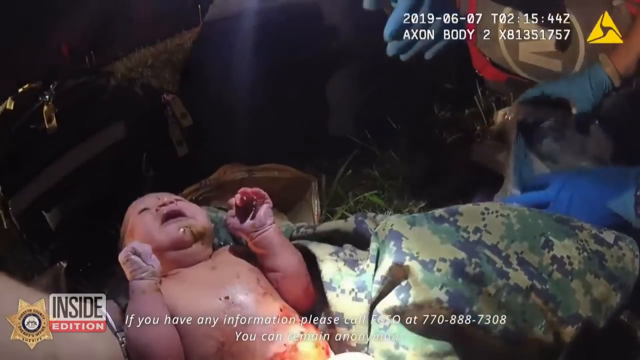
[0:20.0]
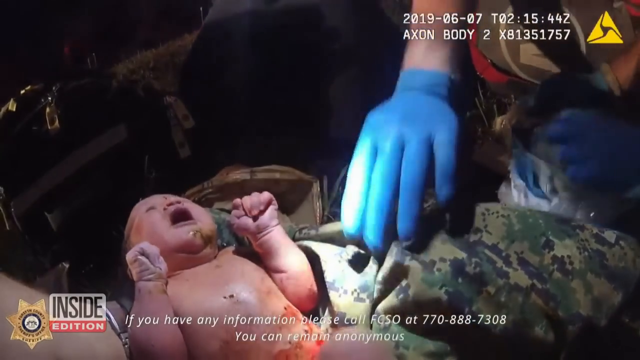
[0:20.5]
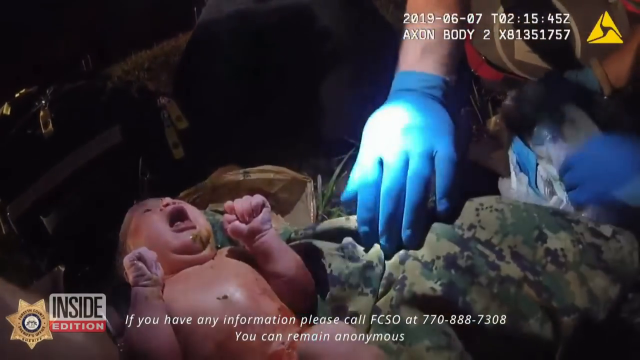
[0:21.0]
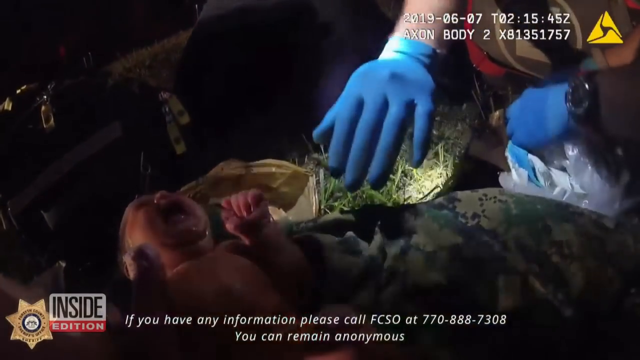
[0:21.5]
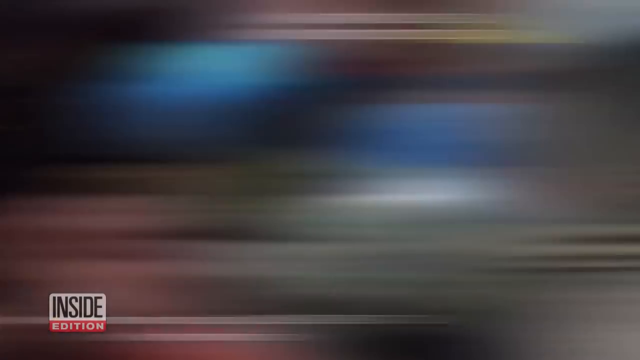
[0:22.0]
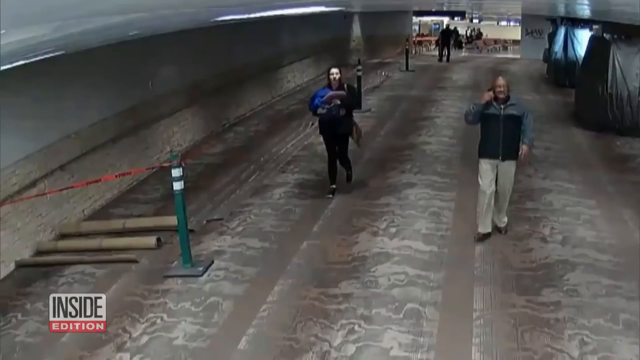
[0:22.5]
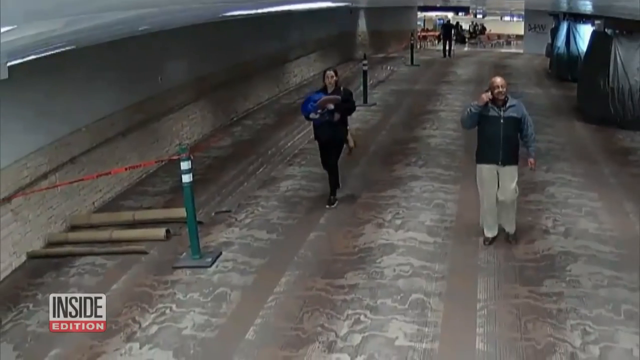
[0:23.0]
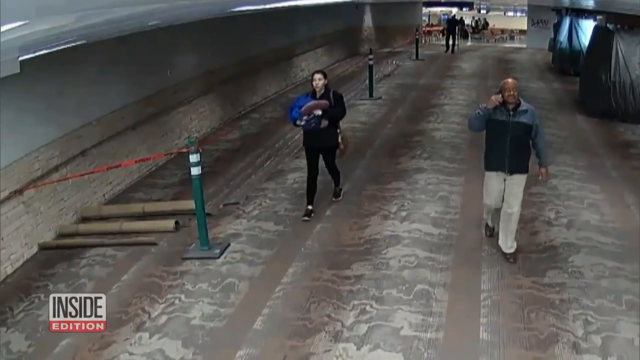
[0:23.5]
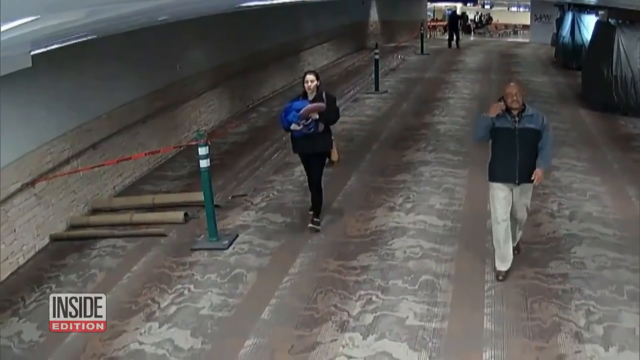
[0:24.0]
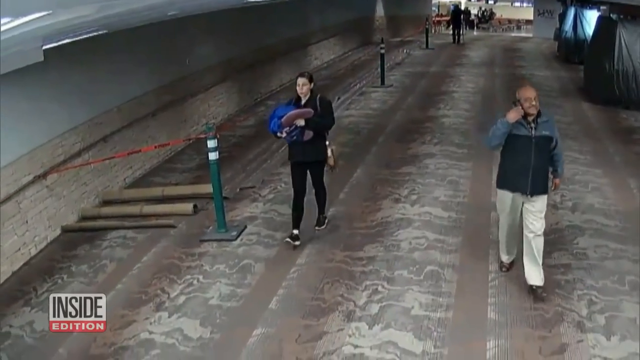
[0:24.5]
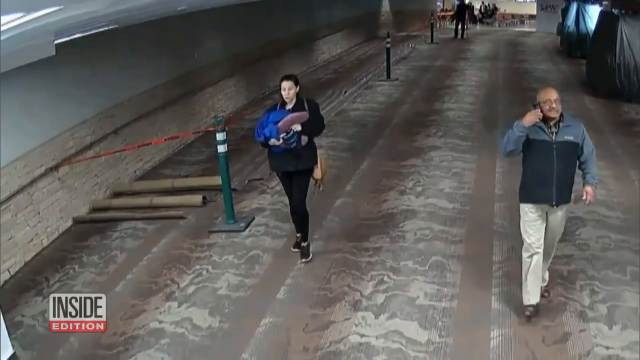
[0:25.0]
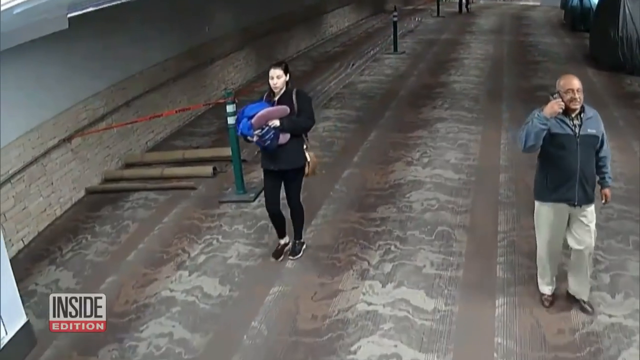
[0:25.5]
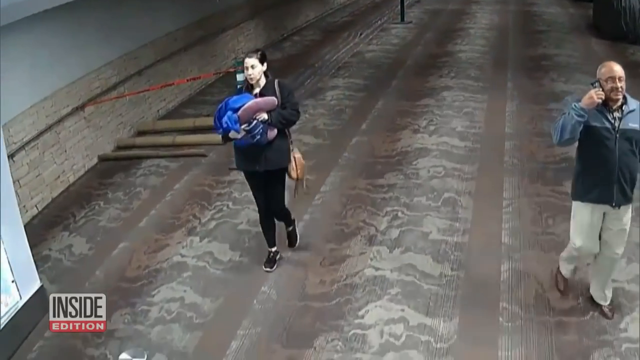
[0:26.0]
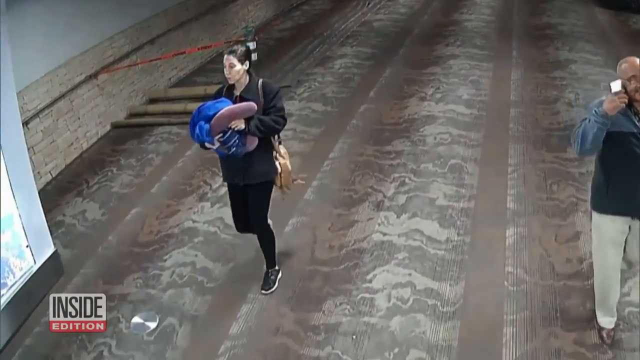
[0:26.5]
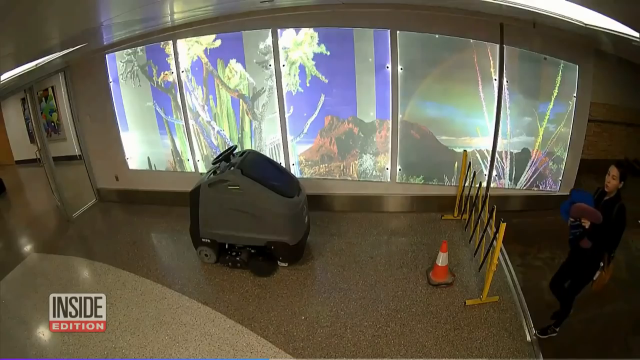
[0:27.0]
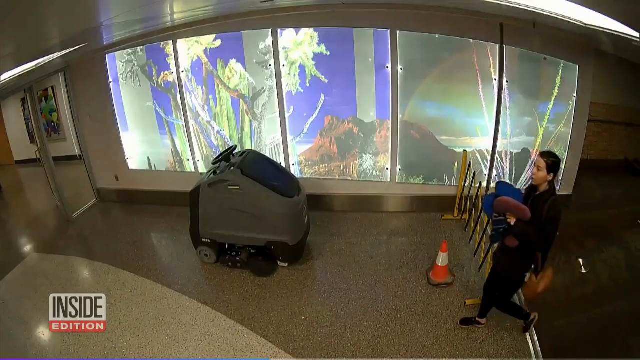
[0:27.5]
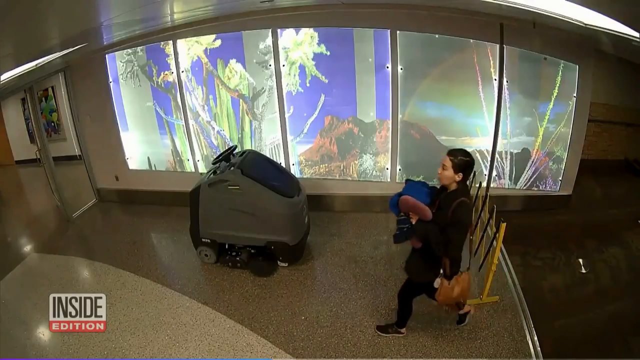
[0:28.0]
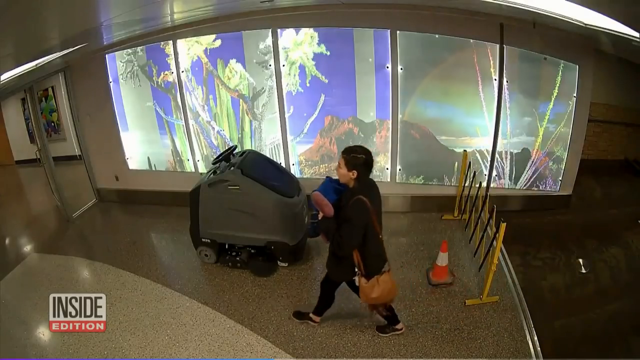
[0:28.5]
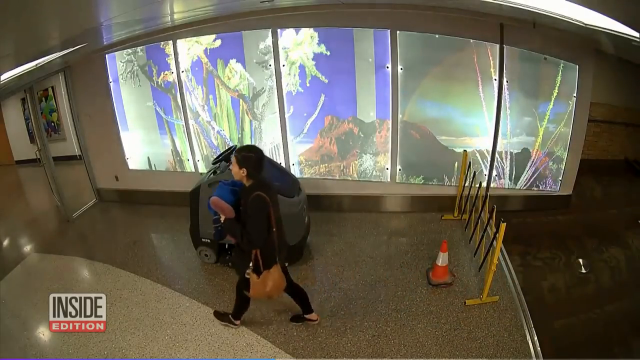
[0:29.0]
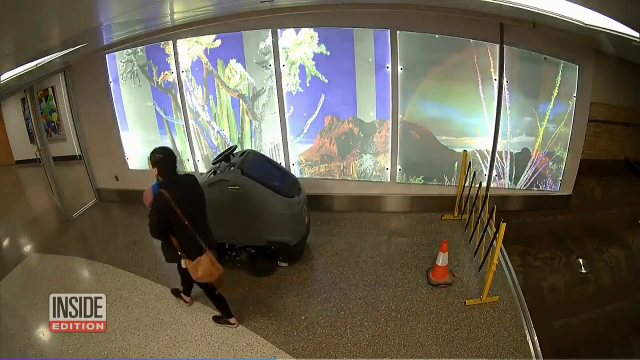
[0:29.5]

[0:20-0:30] The baby is toward the left side of the screen, crying now that it has been let out of the bag, while medical personnel set up equipment to check it. The baby is dirty, with dirt on its face and body, and a camo blanket or jacket has been laid out for it. The scene cuts abruptly to a woman and a man walking through what looks like an industrial building, such as an airport or a train station. The woman carries a bunch of items in her arms, moves quickly, and looks a little suspicious. The man does not appear to be traveling with her; he simply walks down the corridor. She passes a piece of equipment that looks like one of the small motorized vehicles driven inside airports. The video then cuts back to the baby and the personnel checking on and caring for it.